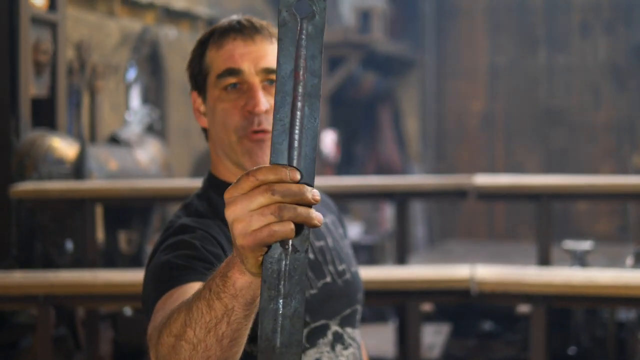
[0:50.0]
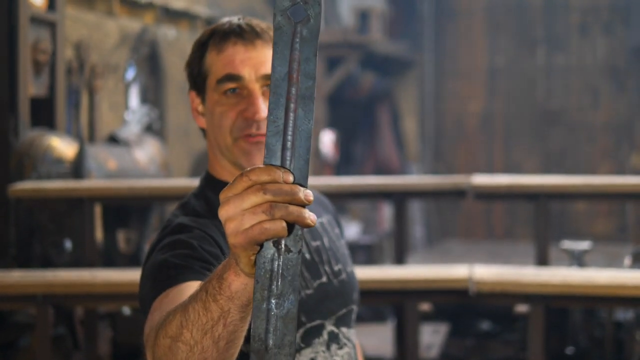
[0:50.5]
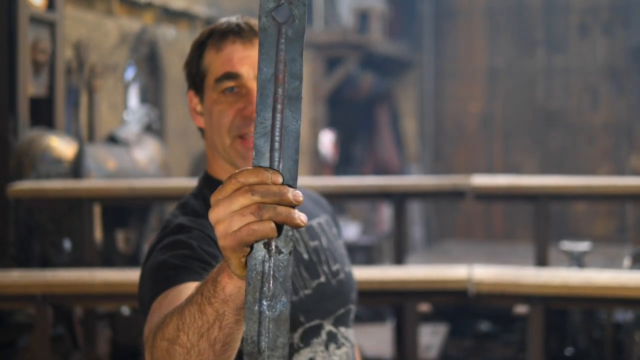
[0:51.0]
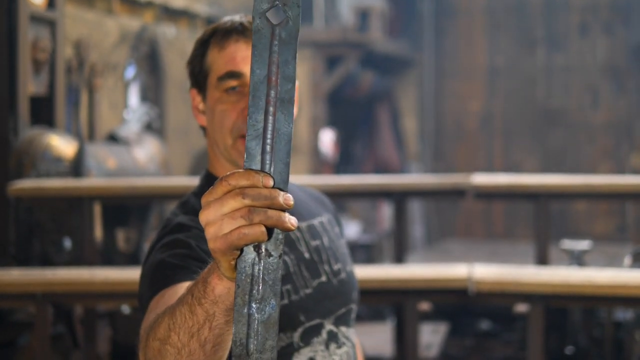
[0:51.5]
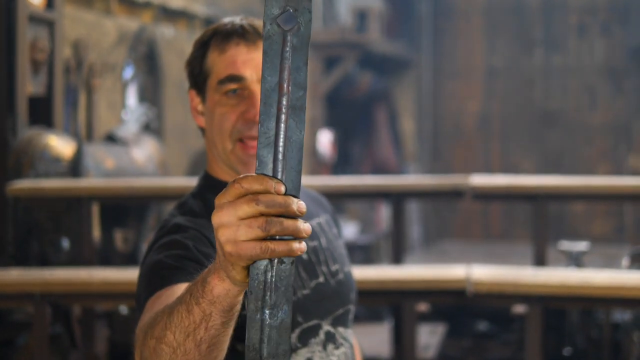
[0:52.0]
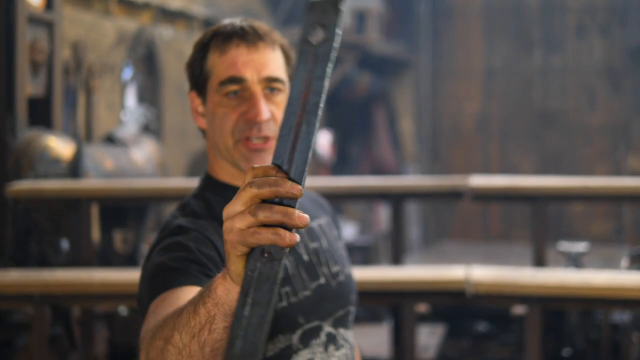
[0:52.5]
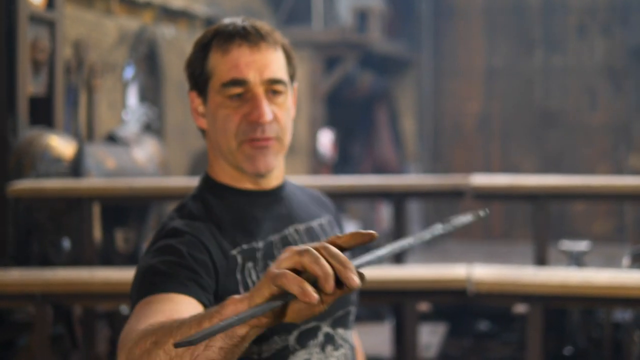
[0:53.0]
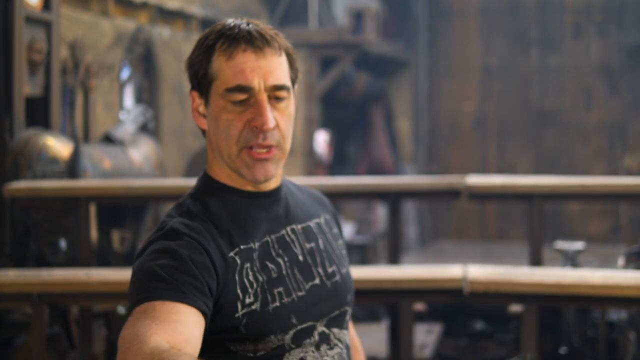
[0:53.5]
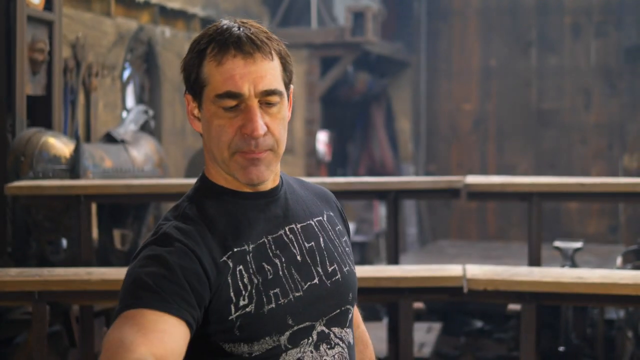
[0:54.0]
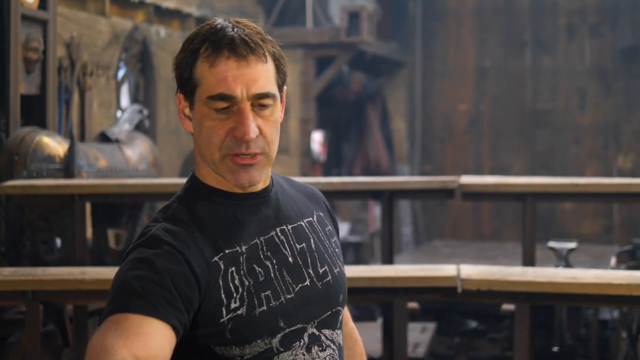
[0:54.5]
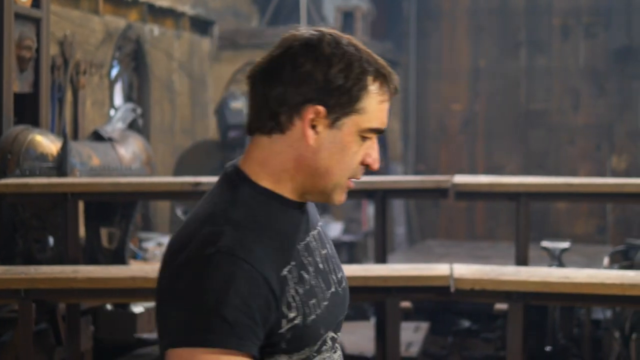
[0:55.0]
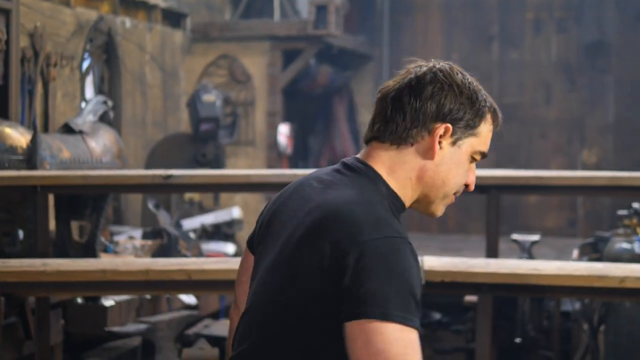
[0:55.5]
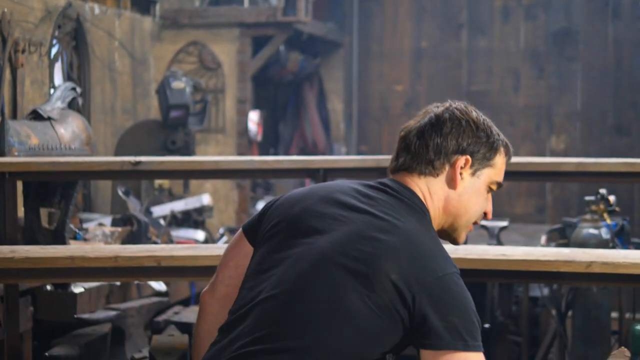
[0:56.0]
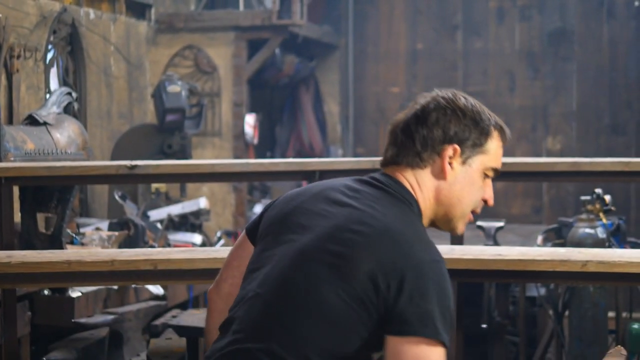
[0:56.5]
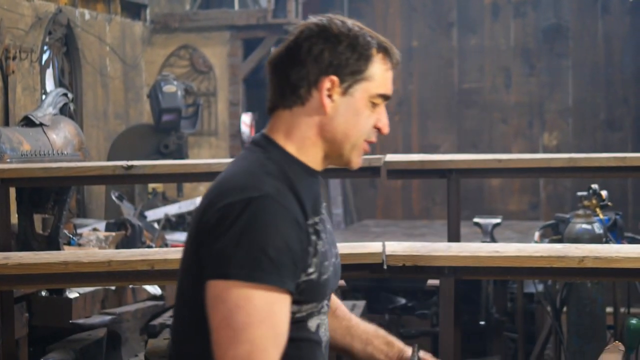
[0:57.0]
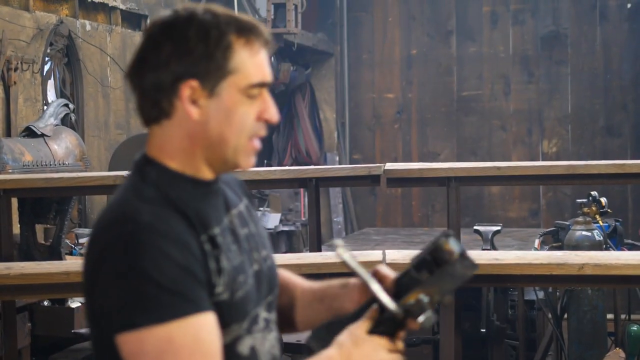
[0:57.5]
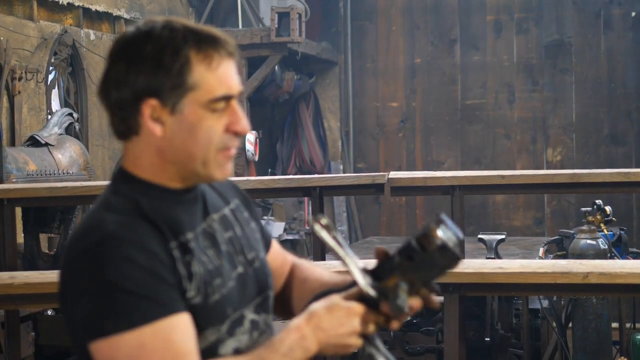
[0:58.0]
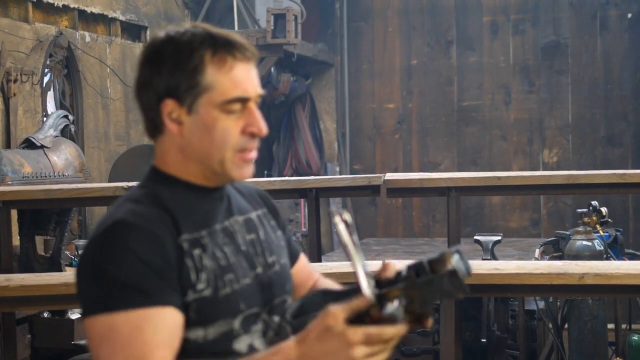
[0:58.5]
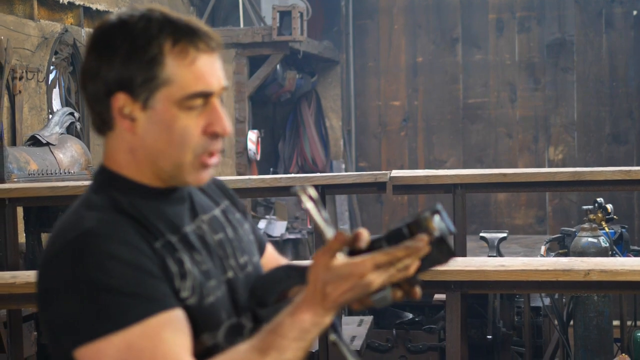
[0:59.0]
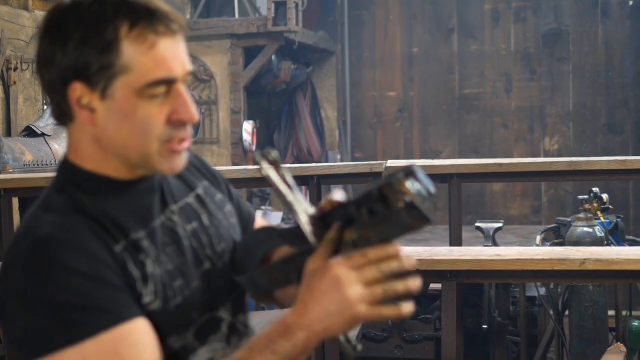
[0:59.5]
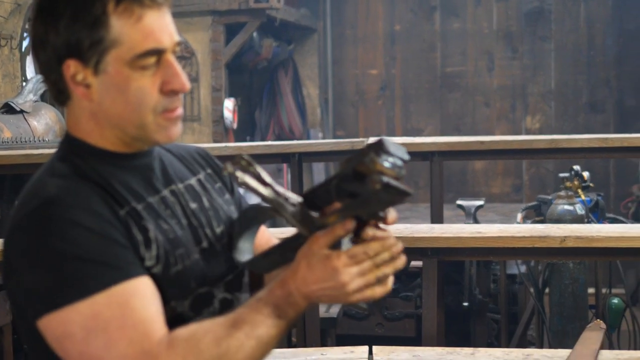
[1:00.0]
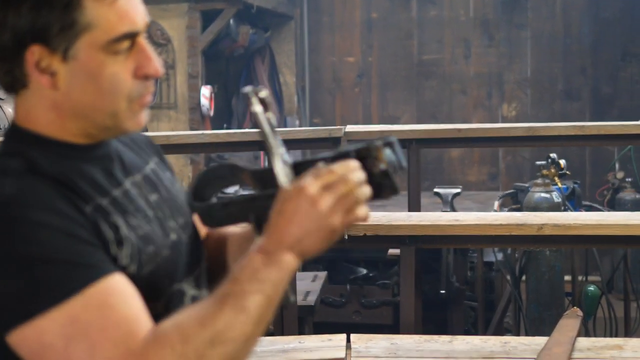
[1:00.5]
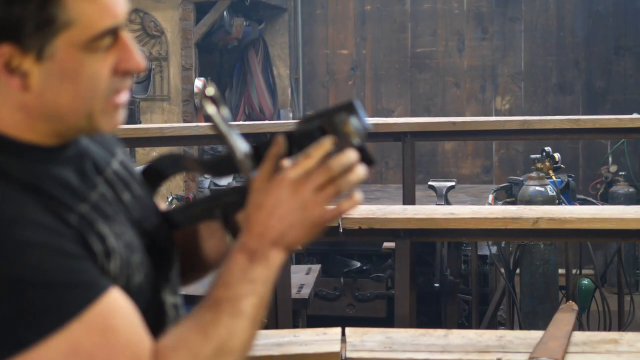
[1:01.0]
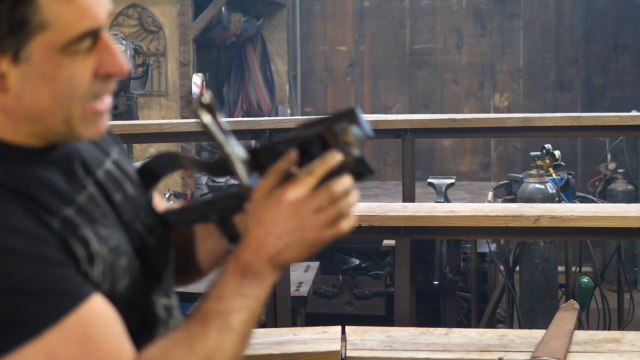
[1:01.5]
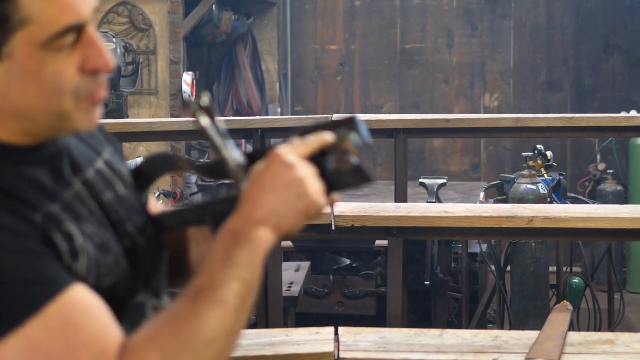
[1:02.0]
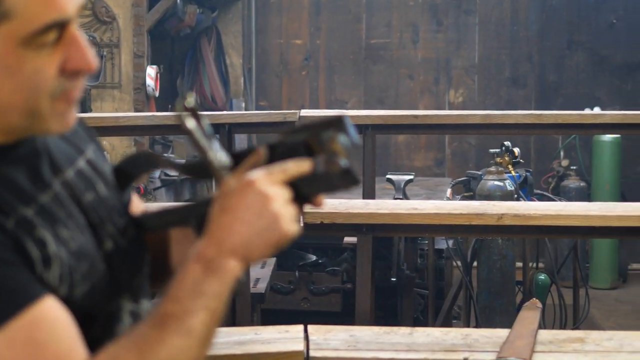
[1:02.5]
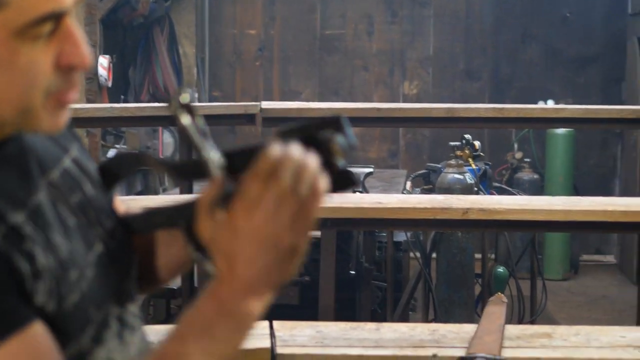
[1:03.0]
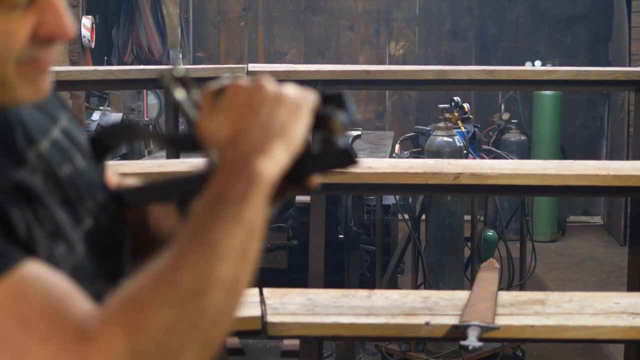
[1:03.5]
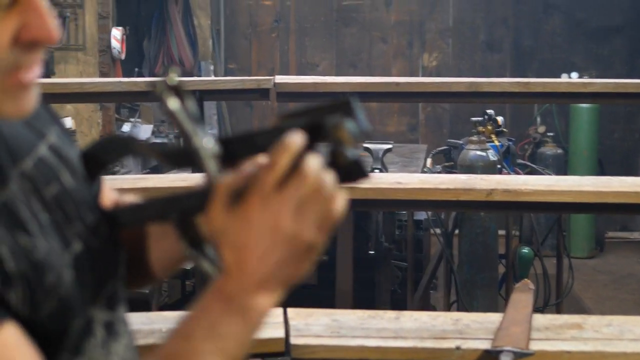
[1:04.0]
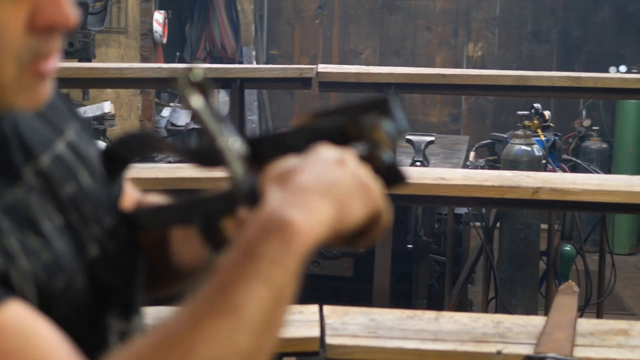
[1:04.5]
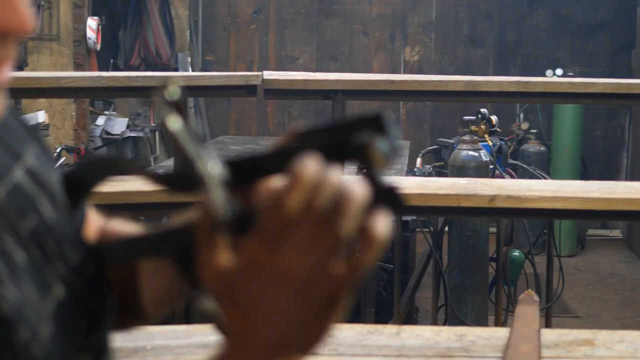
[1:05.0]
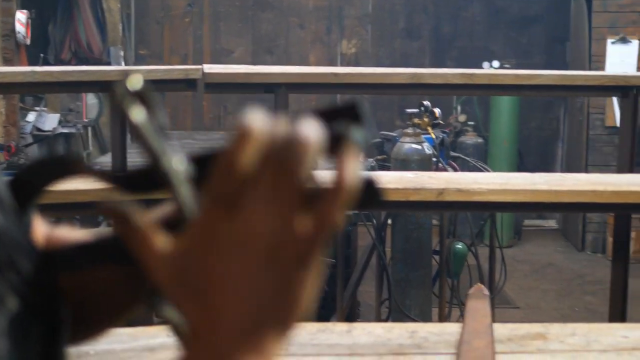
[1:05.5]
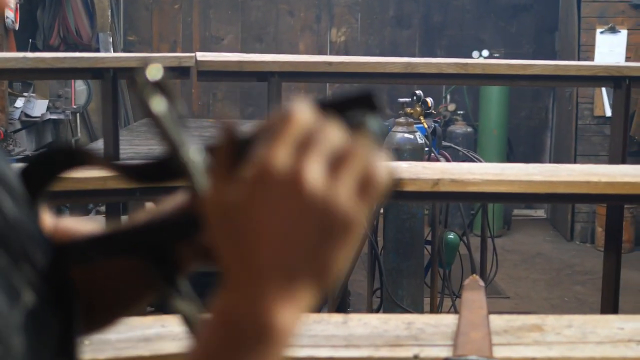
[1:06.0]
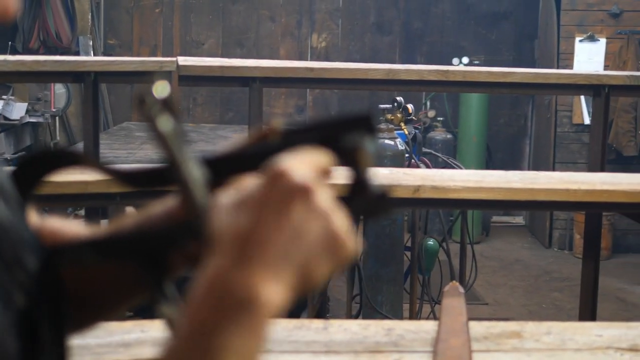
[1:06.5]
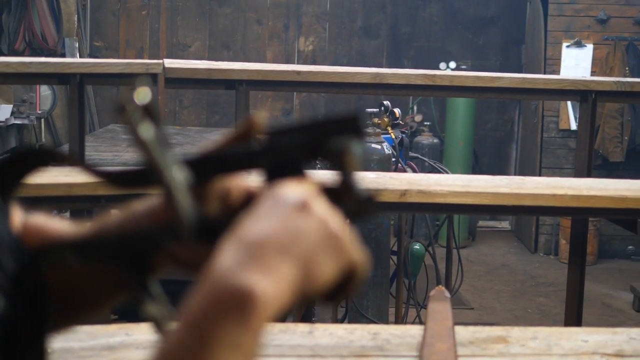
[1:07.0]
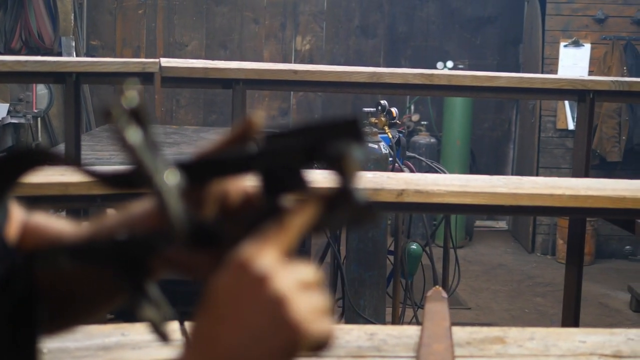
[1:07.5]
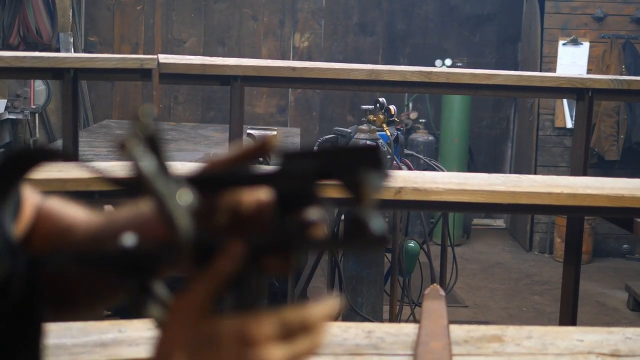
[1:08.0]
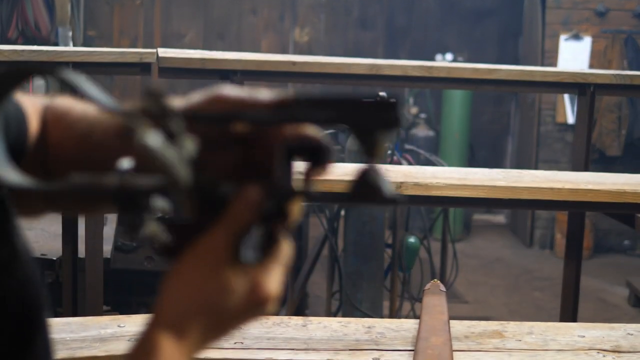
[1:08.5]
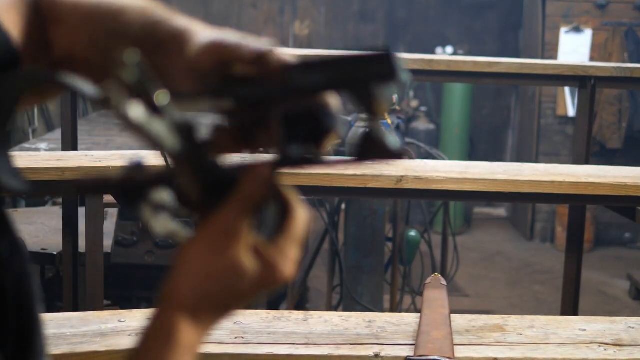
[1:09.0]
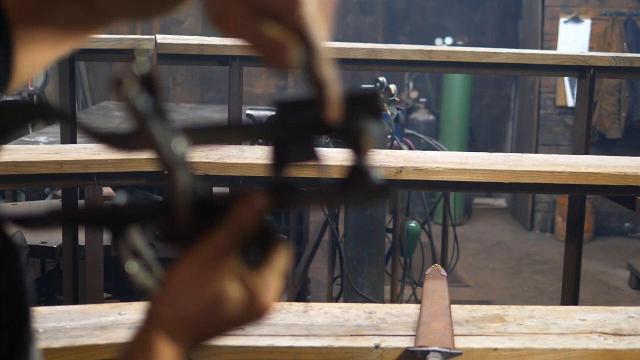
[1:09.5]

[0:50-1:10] The long metal piece, about two feet long, has a hole at the top with something soldered on top of it. The other piece has two vice grips on it, with a loop toward the man and the vice grips dividing the loop side from the flat side. The image is blurry as he goes over the flat piece, its bottom, and the right side where something is soldered into the hole. He then picks up the piece held together by the vice grips. The sword is visible at the bottom of the frame. The man and setting stay the same.